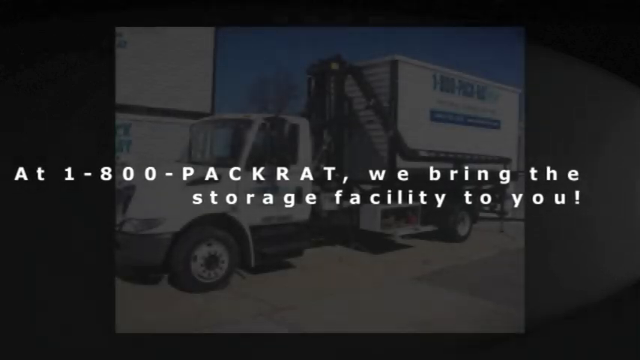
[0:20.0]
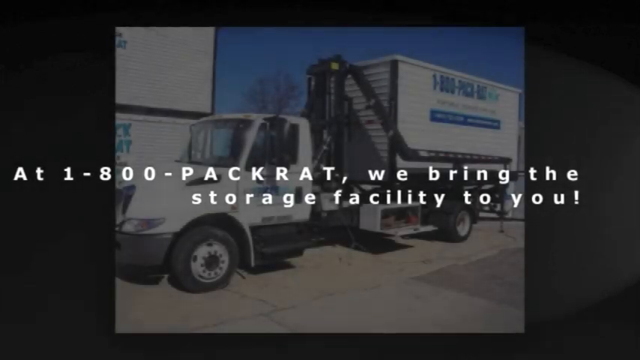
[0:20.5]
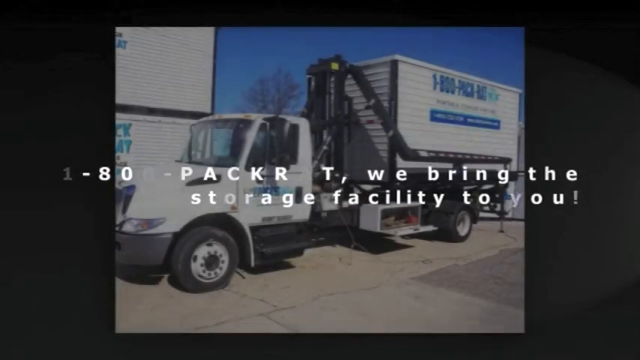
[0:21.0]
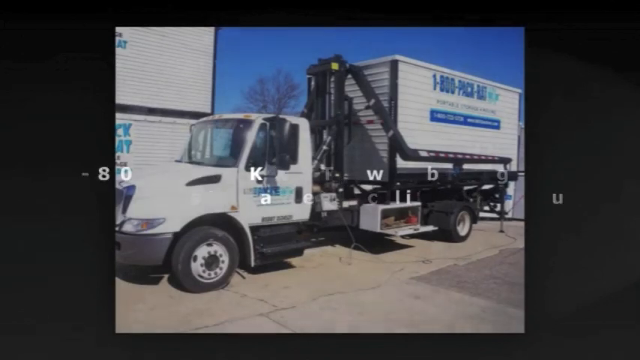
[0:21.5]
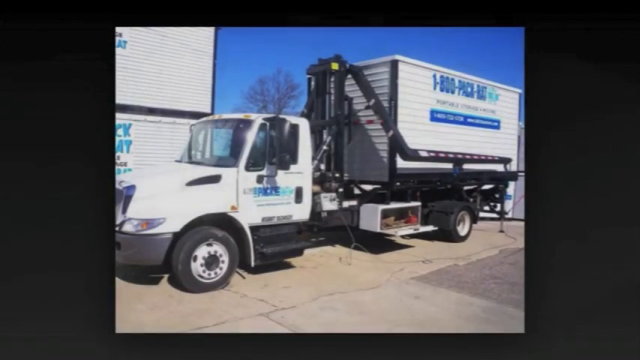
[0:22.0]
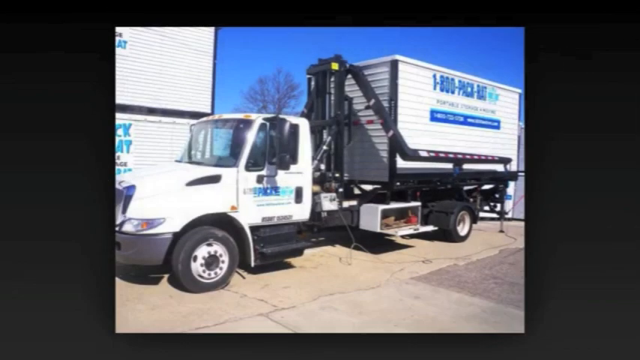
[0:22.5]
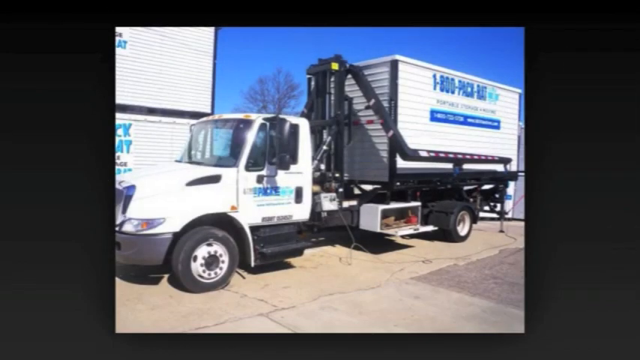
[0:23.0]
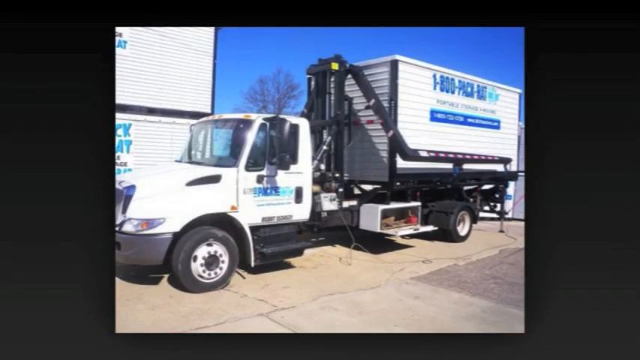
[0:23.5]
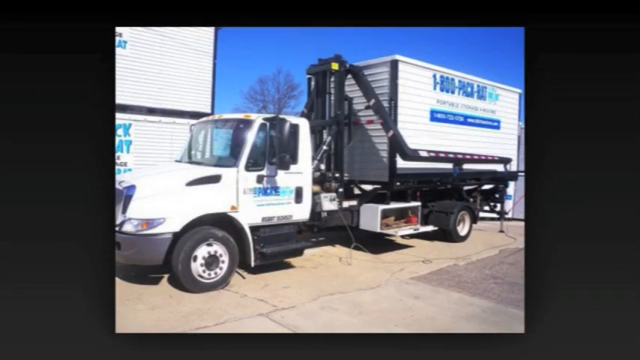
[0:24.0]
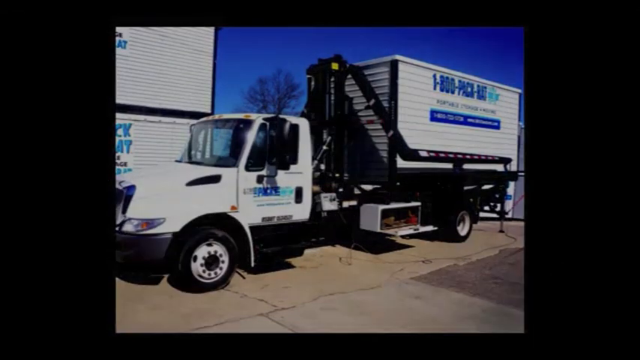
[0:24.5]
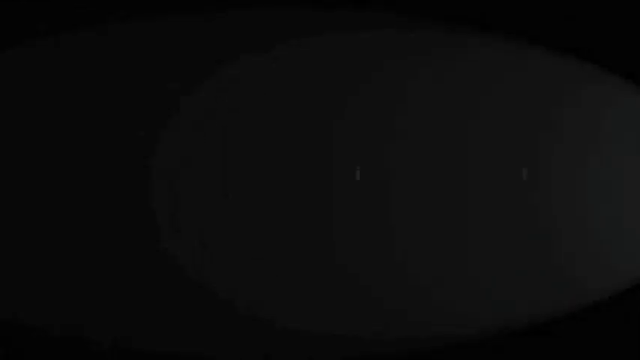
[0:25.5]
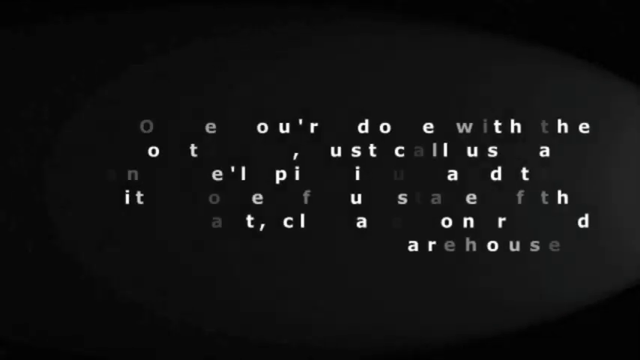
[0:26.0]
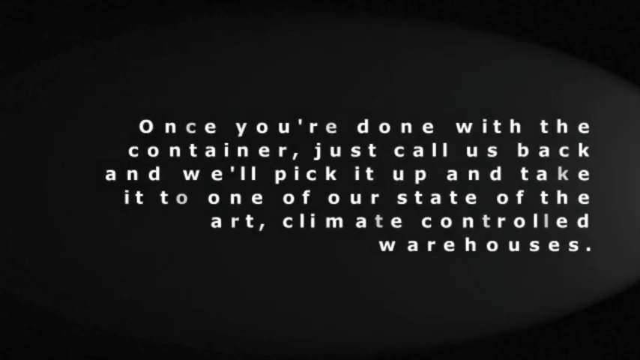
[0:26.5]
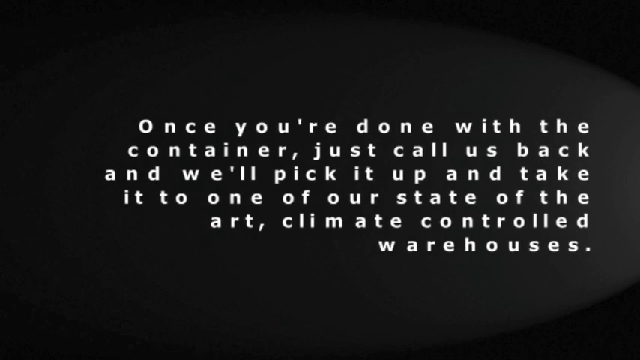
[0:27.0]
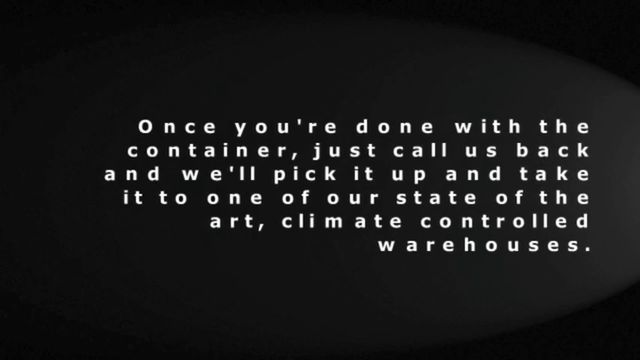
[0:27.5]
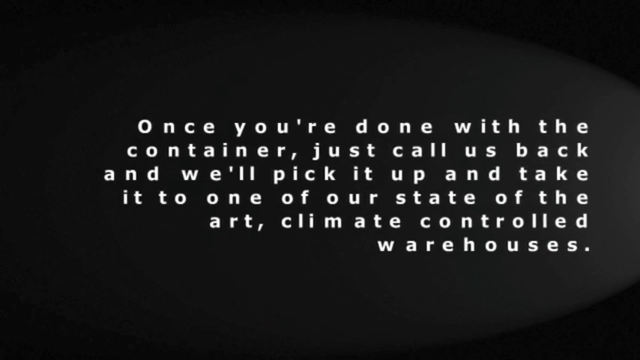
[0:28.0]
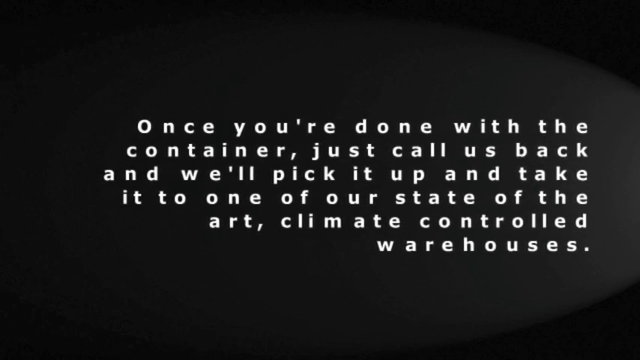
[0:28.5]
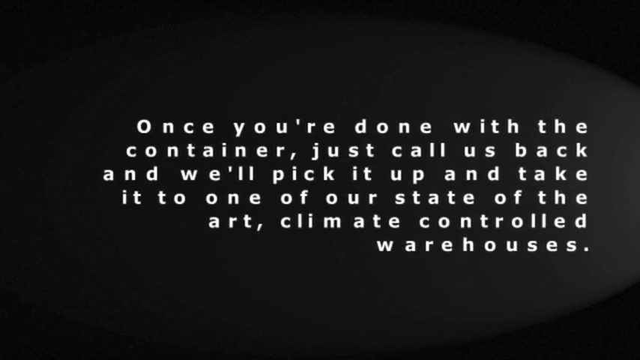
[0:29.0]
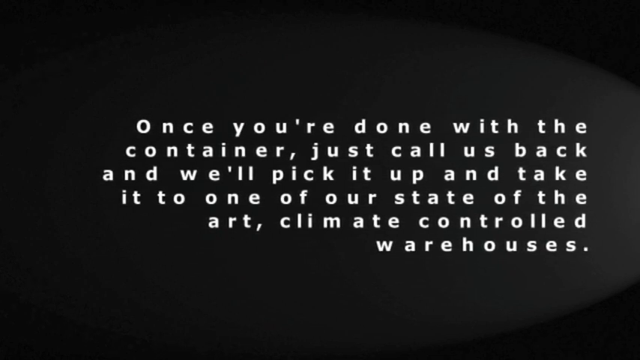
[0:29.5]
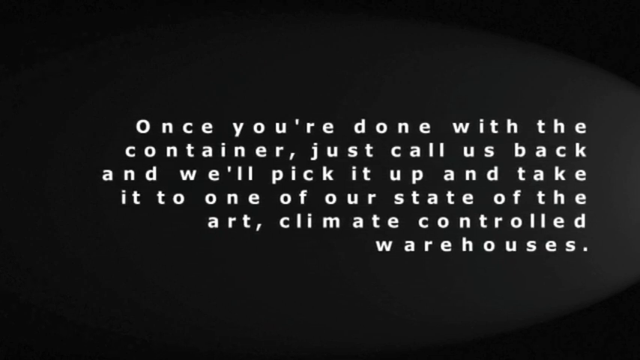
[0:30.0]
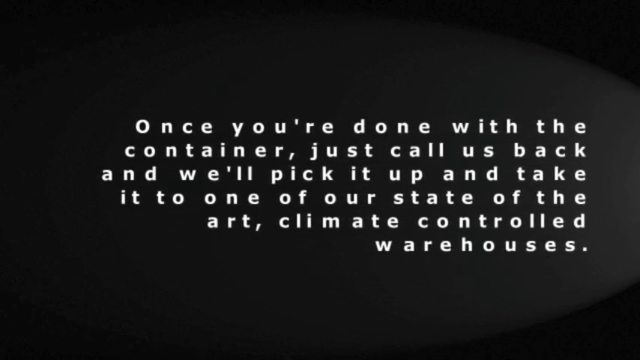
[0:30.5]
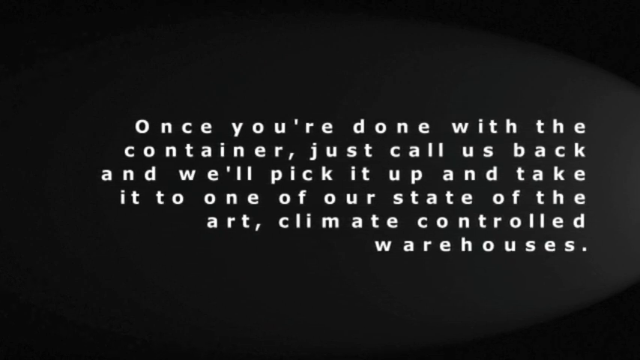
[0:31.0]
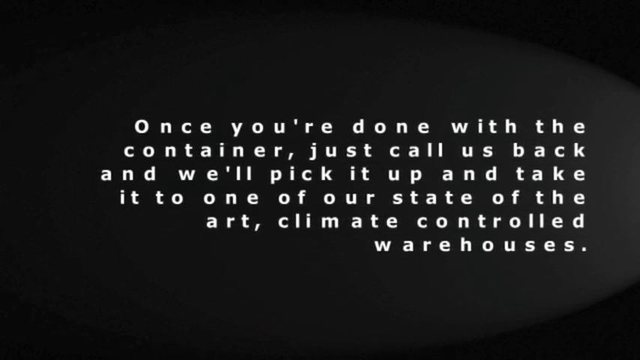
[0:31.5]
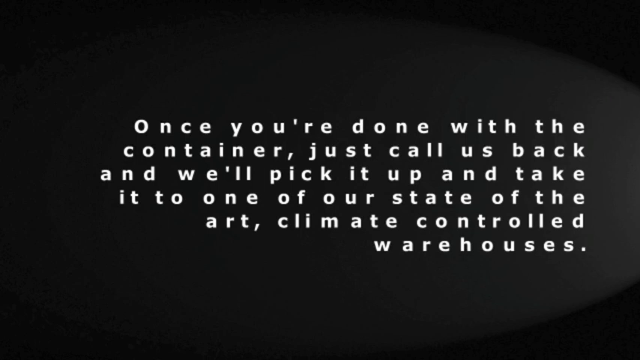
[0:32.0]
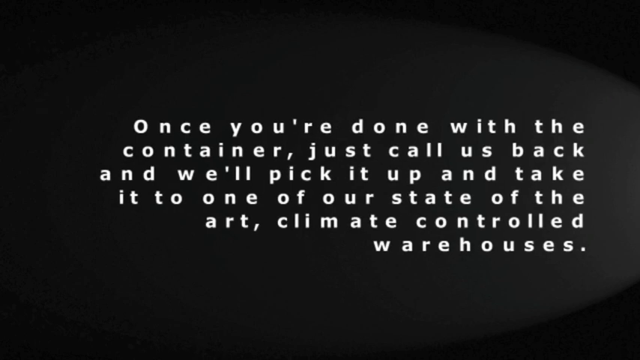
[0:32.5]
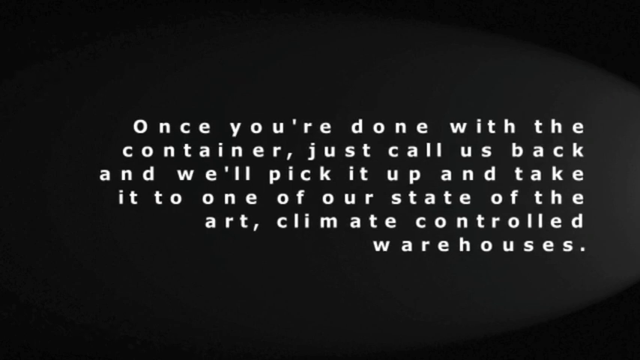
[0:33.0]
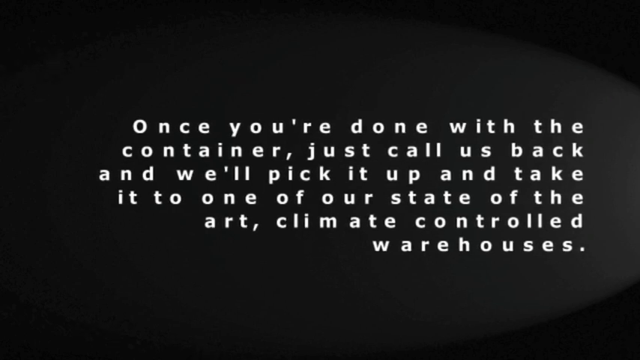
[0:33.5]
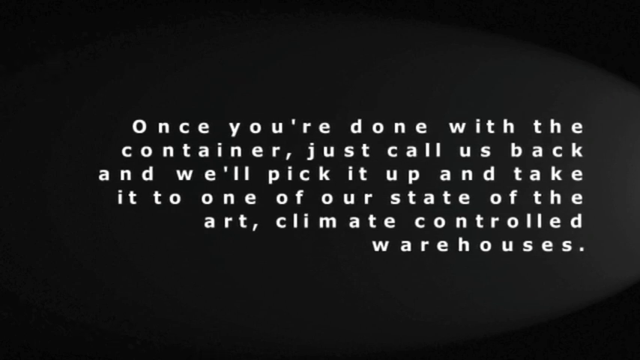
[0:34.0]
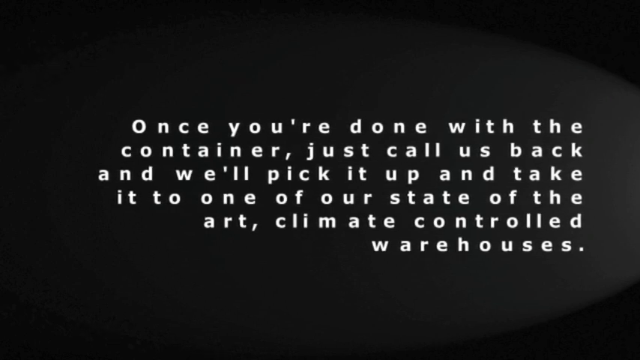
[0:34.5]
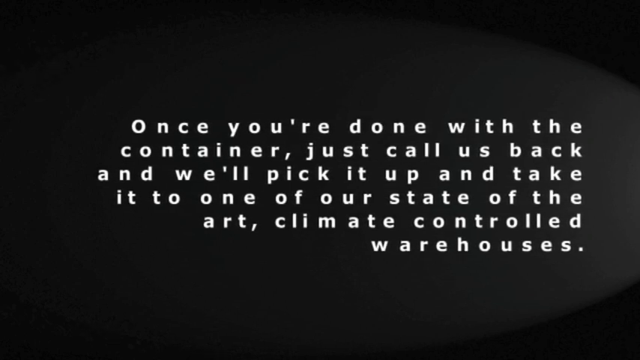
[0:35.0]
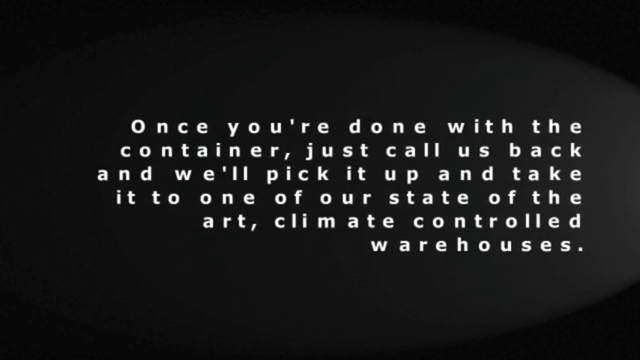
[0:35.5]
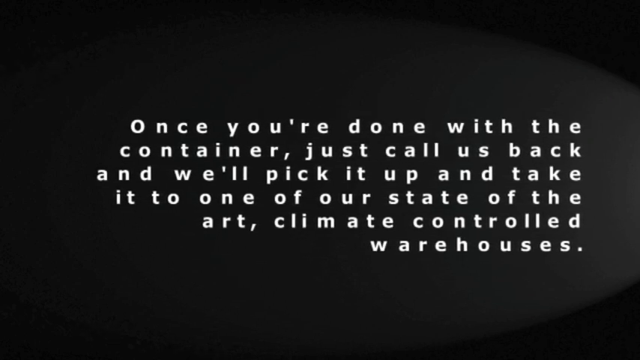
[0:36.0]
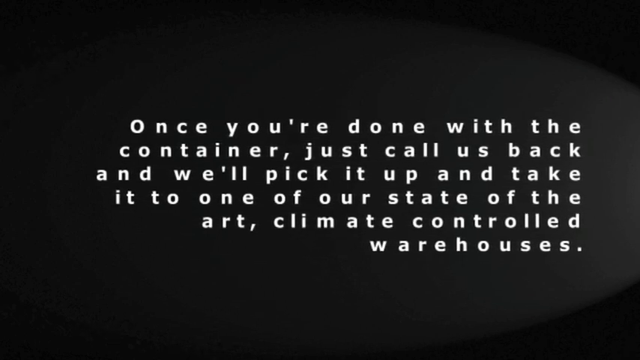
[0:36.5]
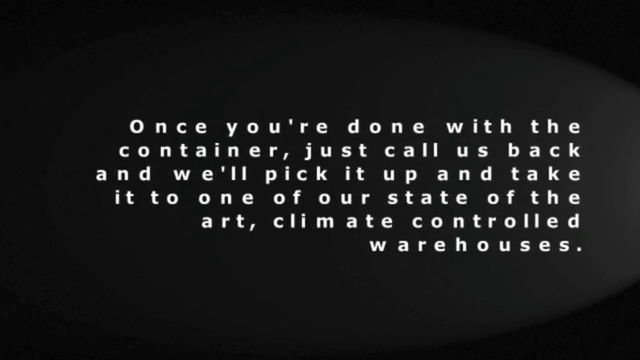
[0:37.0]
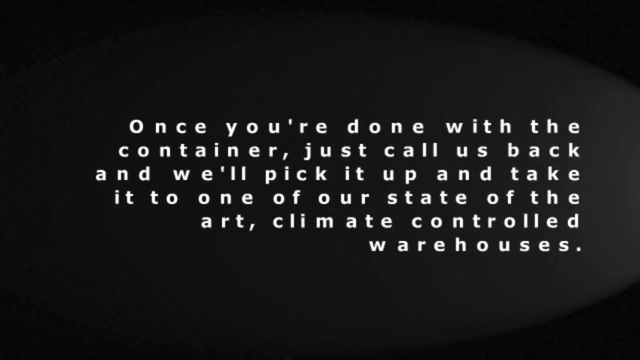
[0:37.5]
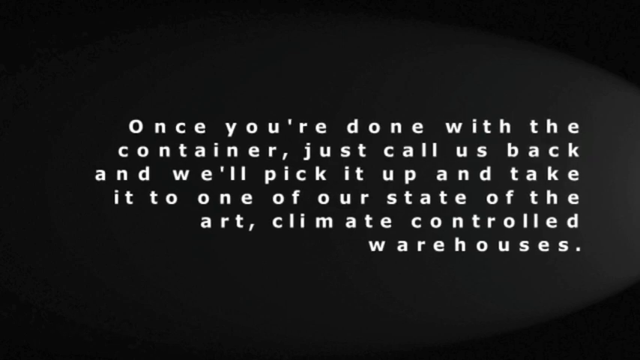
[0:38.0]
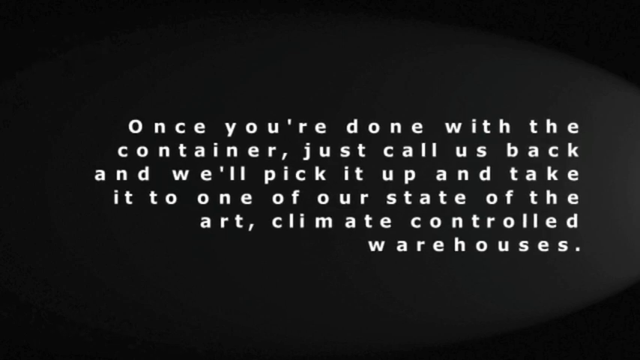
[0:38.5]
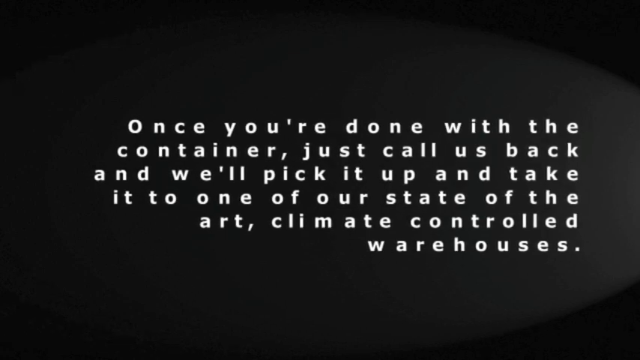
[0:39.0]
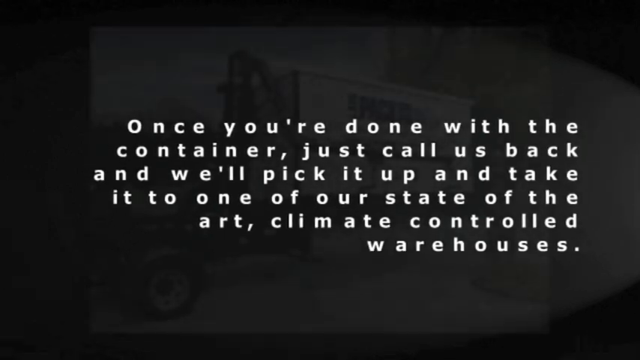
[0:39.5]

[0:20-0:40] Following the text "at 1-800-PACKRAT, we bring the storage facility to you", a picture of a truck that says "1-800-PACKRAT" appears. A large block of text then reads "once you're done with the container, just call us back and we'll pick it up and take it to one of our state of the art" warehouses, and mentions "climate controlled". The video stays on this block of text.